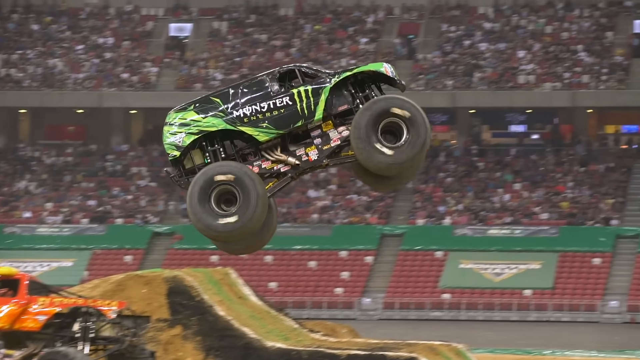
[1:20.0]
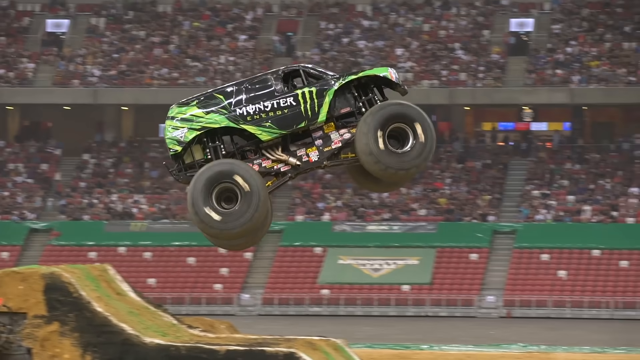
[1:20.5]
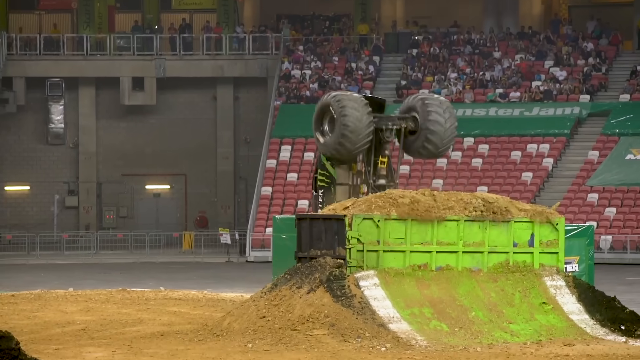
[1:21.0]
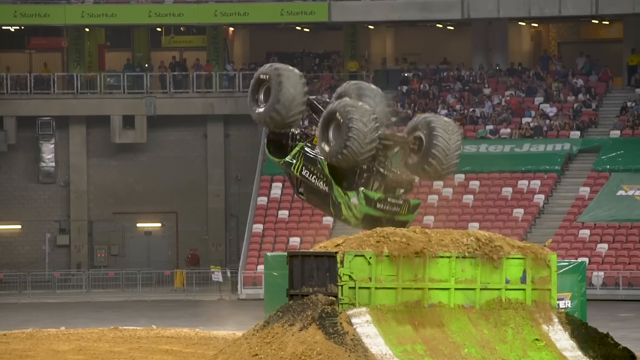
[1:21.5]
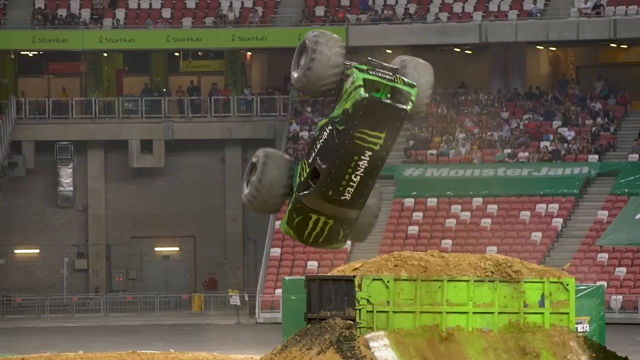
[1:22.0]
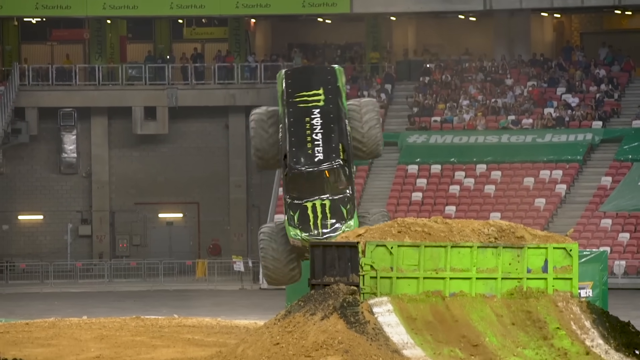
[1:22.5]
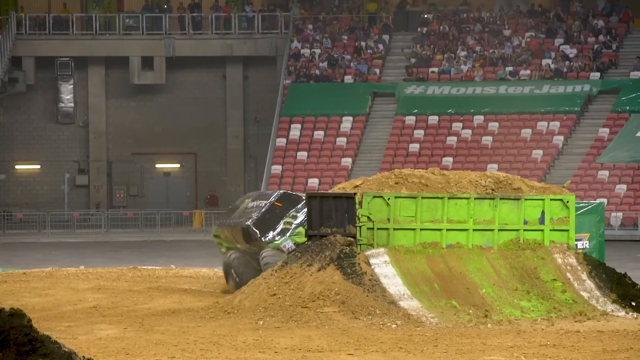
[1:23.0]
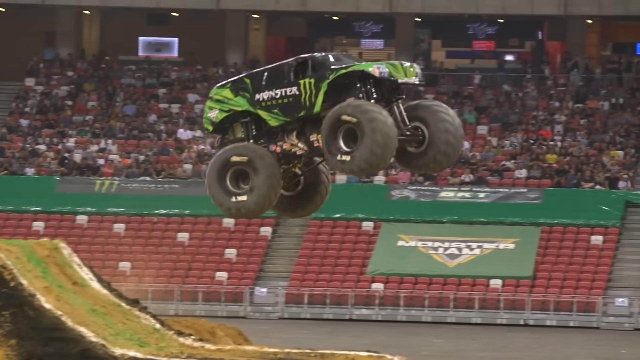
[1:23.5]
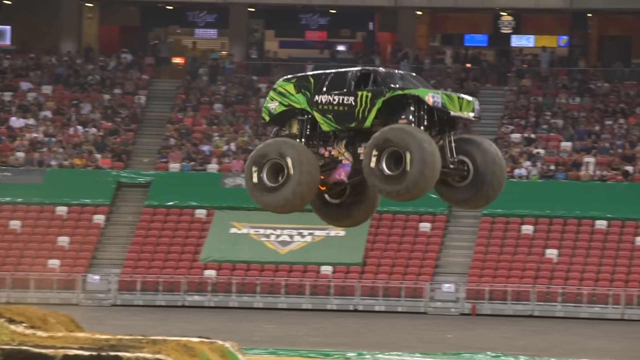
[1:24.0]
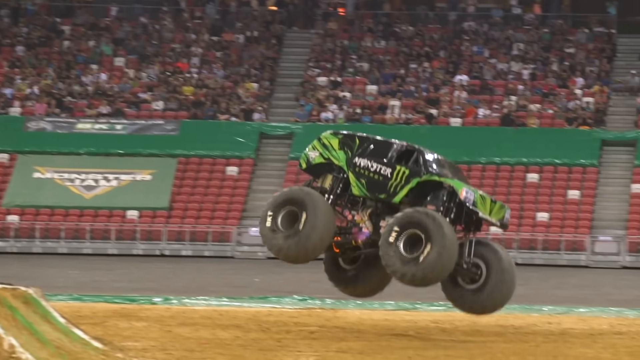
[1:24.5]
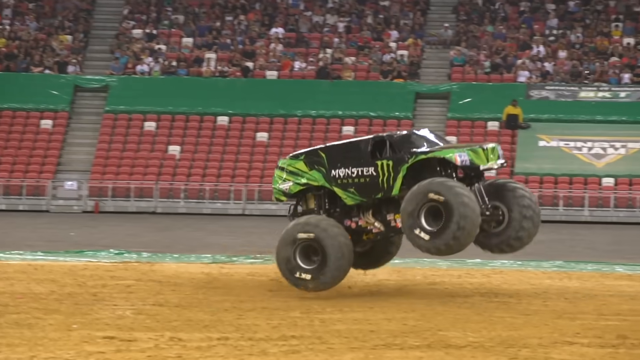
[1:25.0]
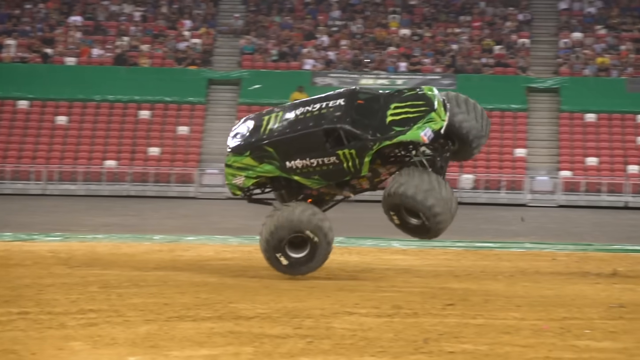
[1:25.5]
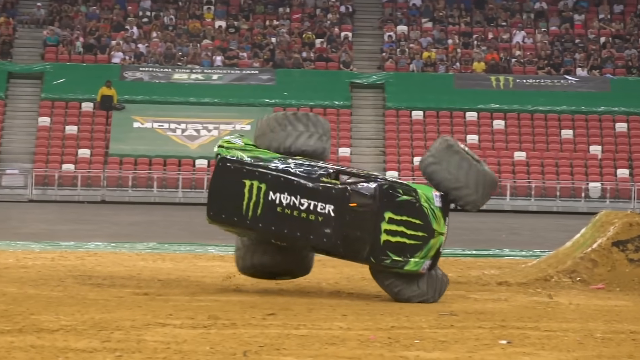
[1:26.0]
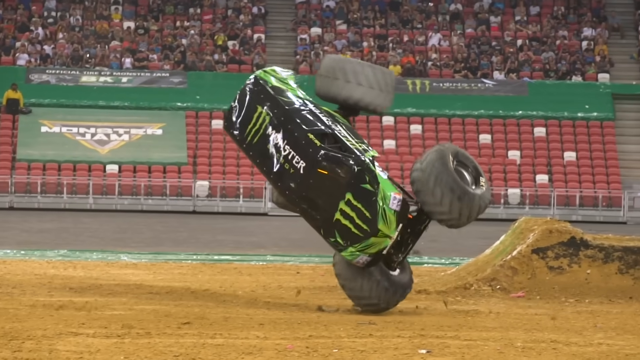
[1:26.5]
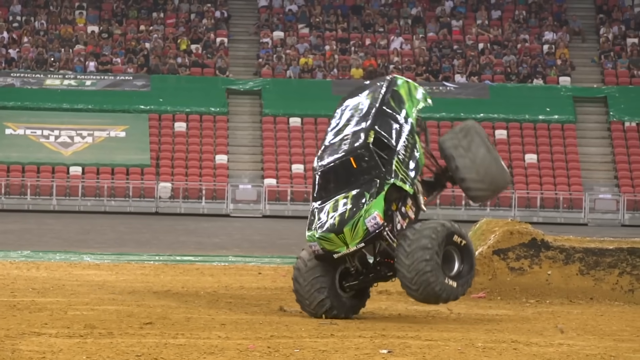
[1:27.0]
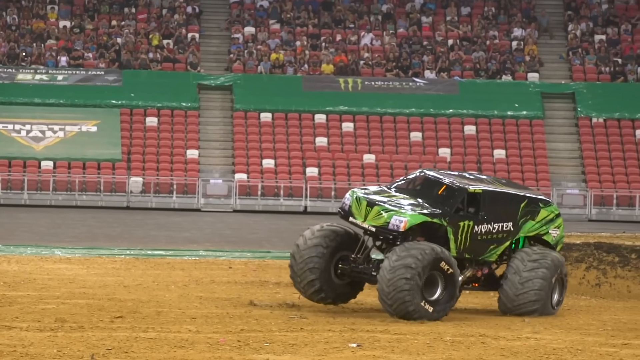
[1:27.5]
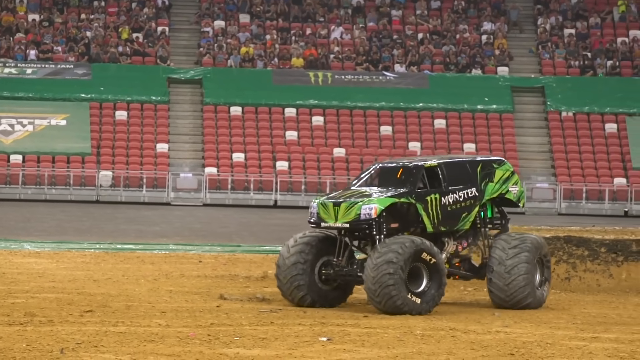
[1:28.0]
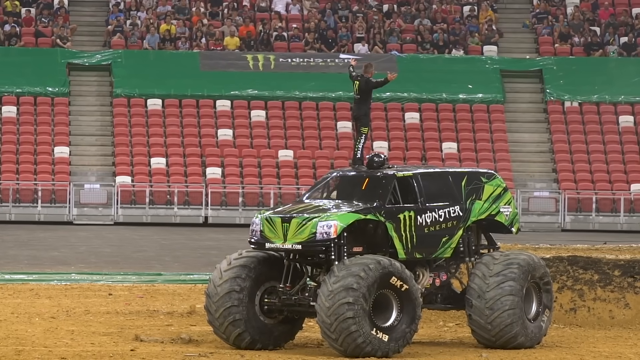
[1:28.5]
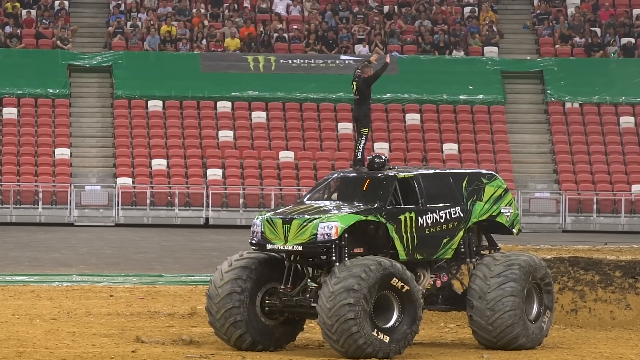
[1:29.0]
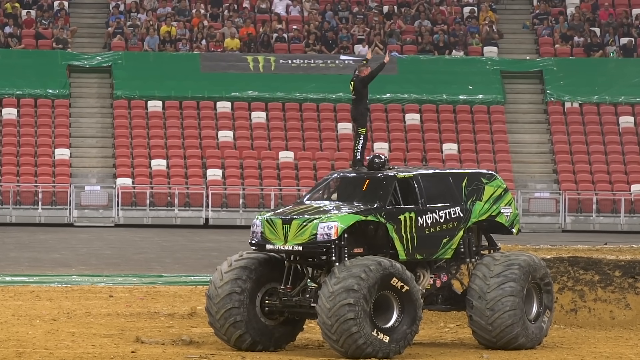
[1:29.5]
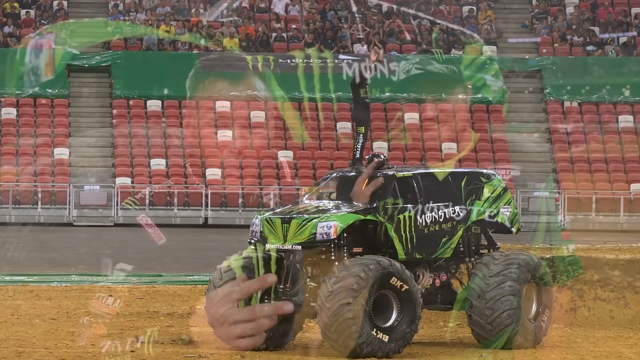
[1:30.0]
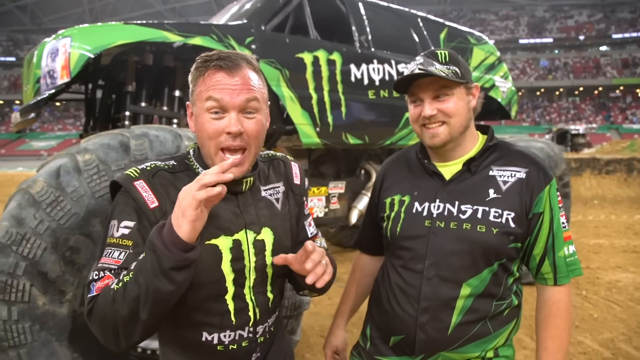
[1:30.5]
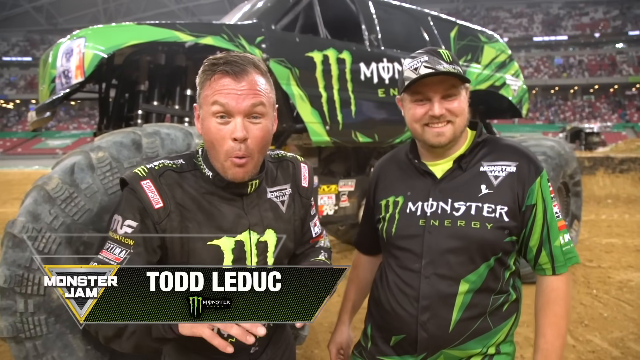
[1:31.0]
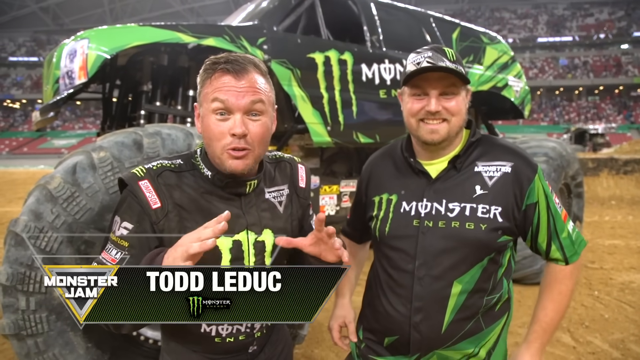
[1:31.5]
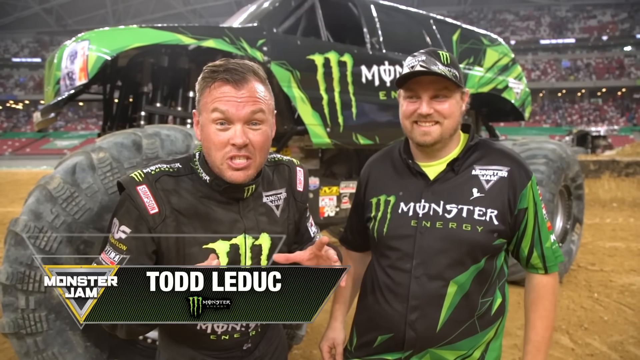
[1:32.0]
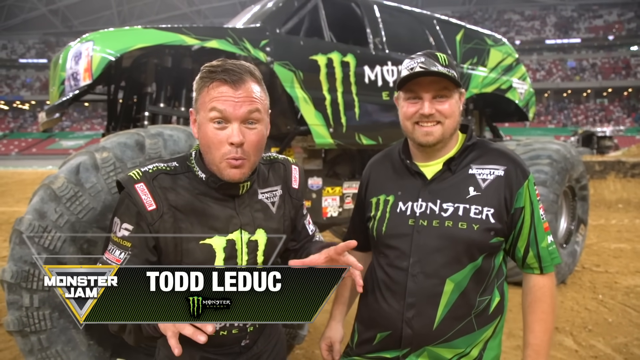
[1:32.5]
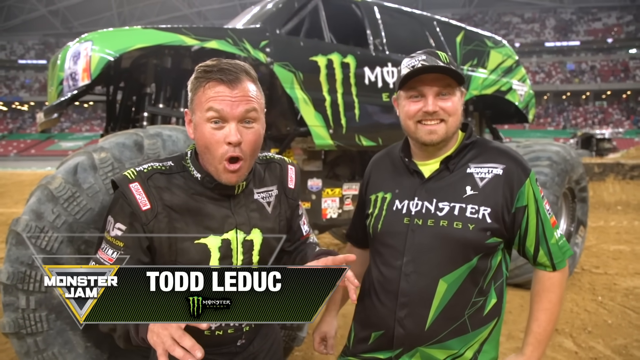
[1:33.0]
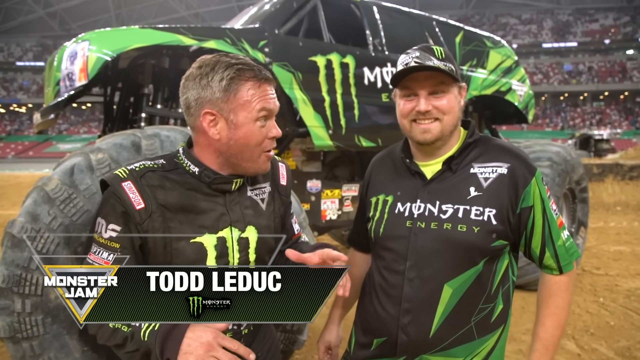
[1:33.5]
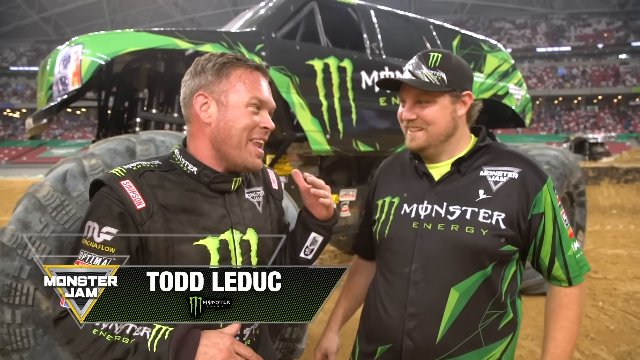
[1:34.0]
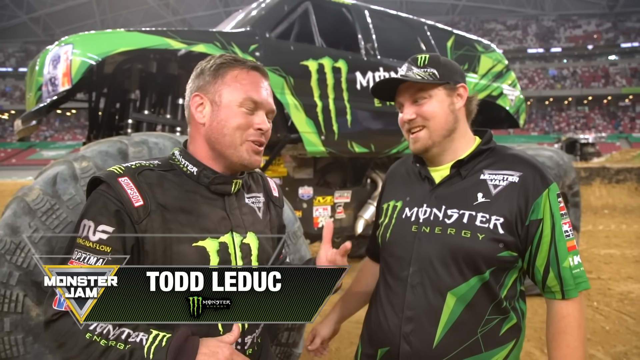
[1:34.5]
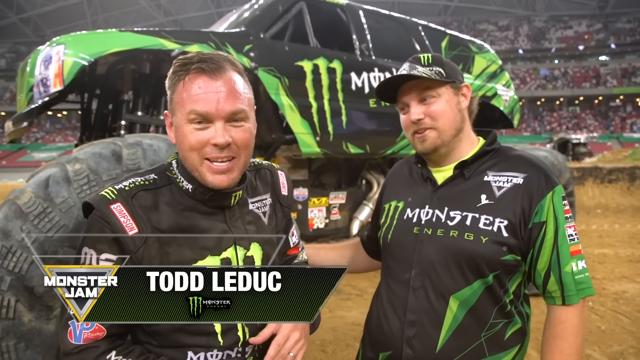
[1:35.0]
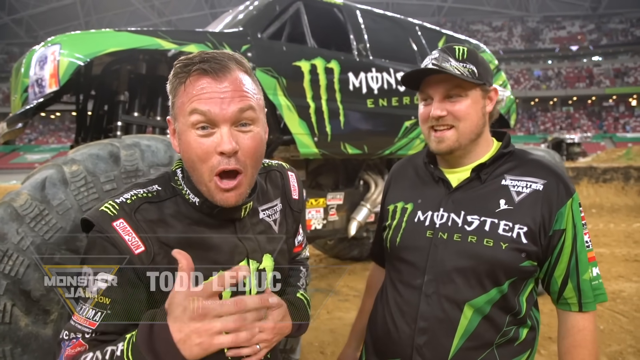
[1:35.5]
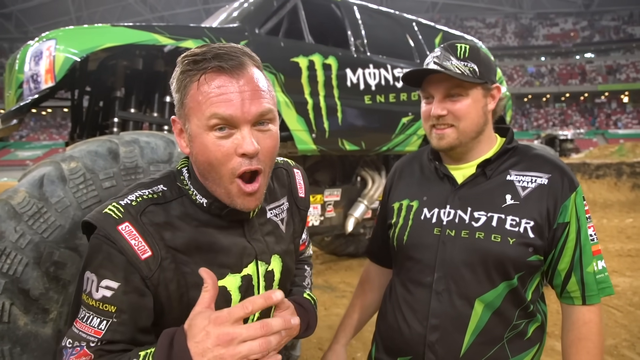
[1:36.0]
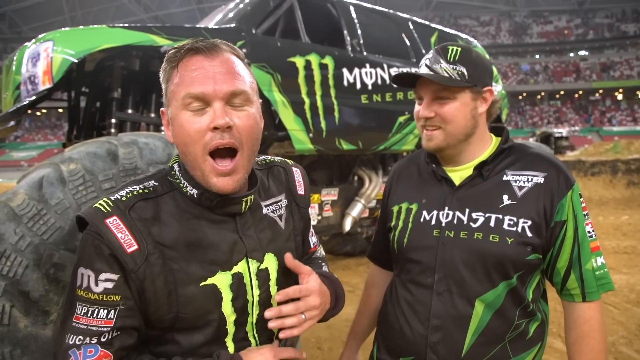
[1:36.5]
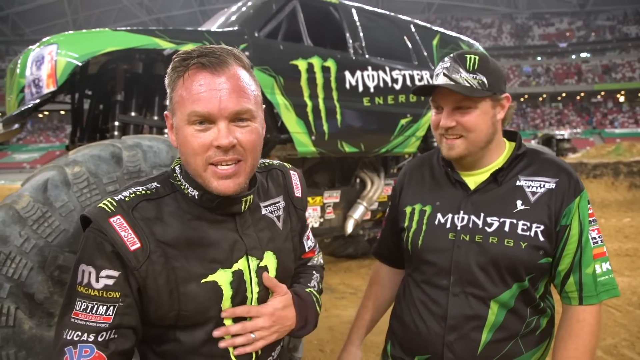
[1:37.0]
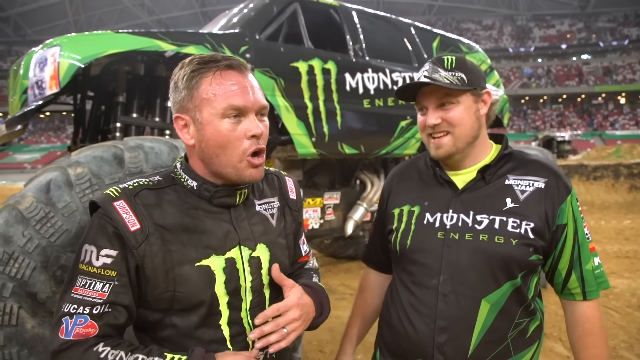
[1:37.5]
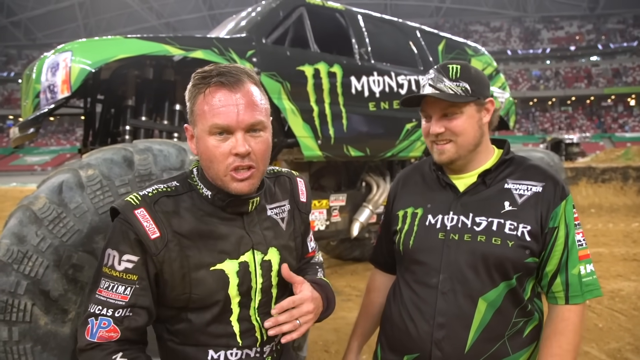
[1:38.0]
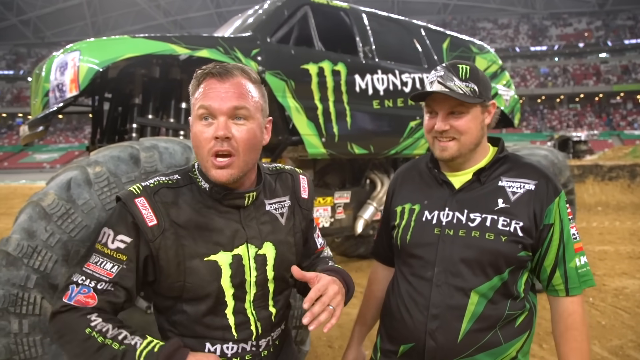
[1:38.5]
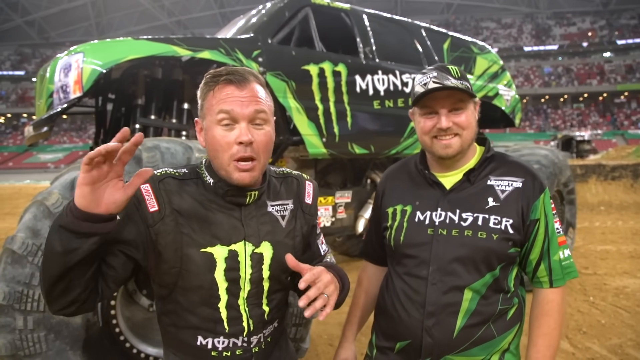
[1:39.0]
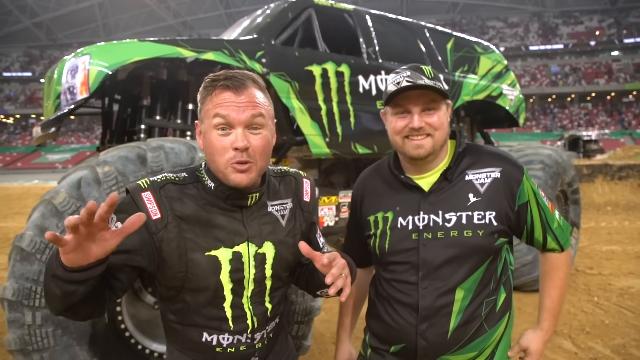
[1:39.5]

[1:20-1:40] The driver of the monster car seems to be questioned about how he did it and how he felt. He is seen up on the vehicle, greeting people. Two men are talking with men from the monster team. The focus is on the green car showing its abilities and on its driver, who seems happy and full of energy, apparently celebrating his performance.